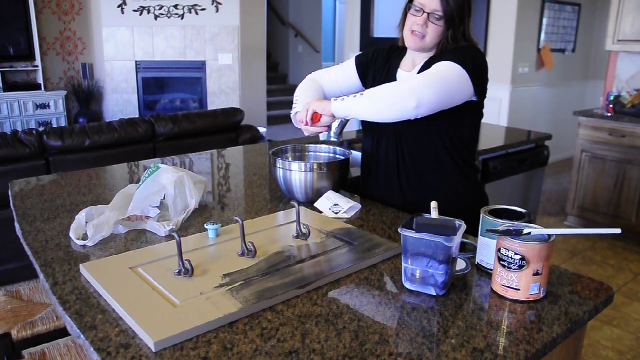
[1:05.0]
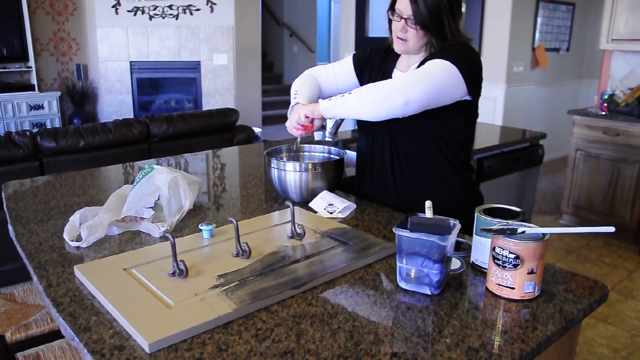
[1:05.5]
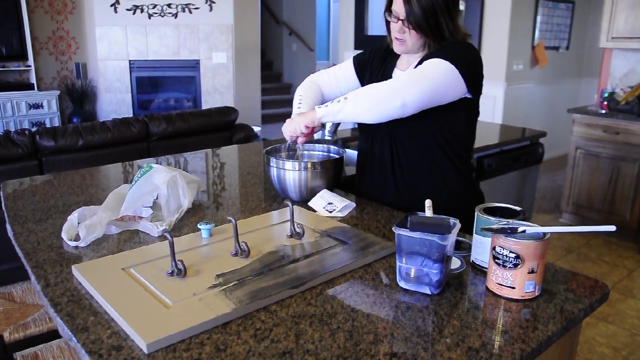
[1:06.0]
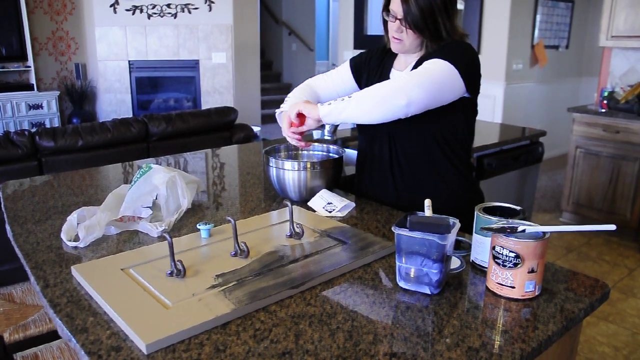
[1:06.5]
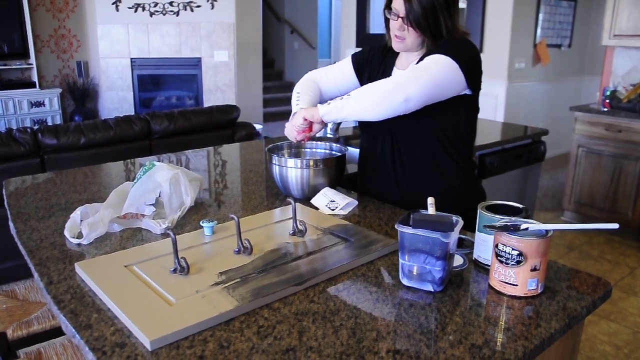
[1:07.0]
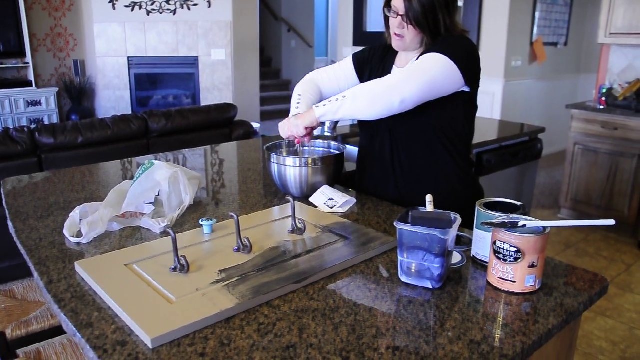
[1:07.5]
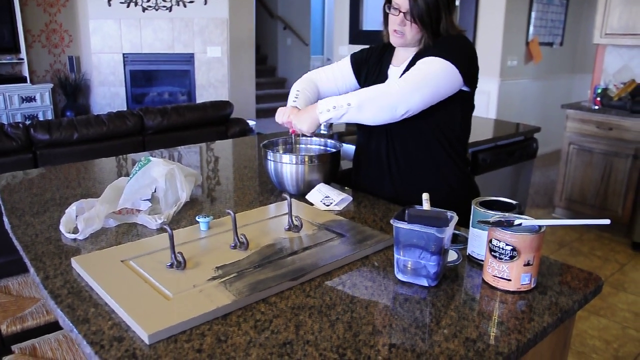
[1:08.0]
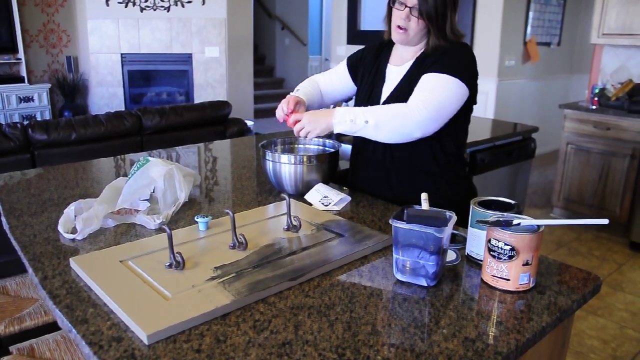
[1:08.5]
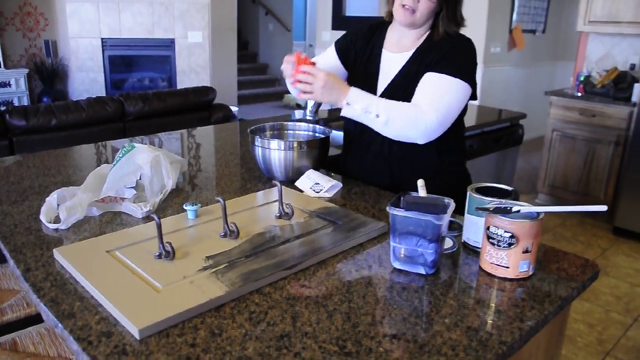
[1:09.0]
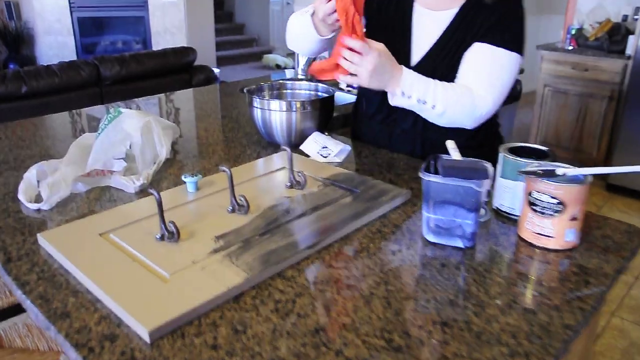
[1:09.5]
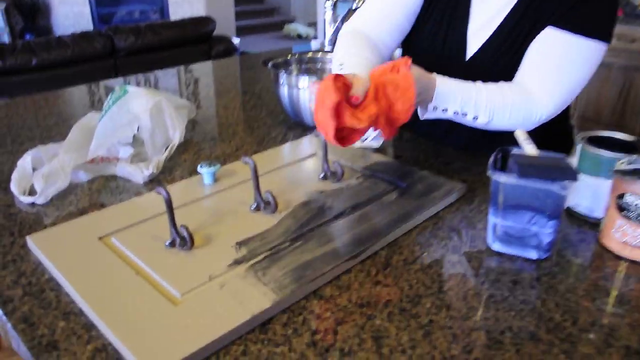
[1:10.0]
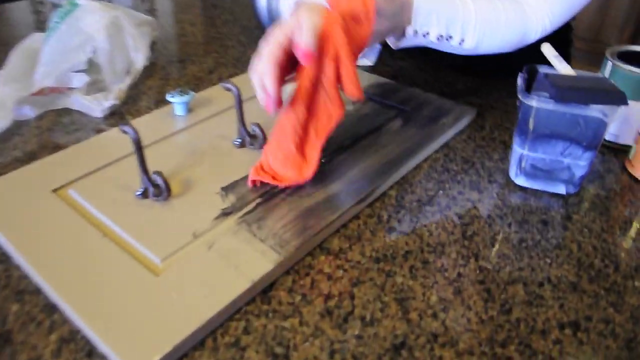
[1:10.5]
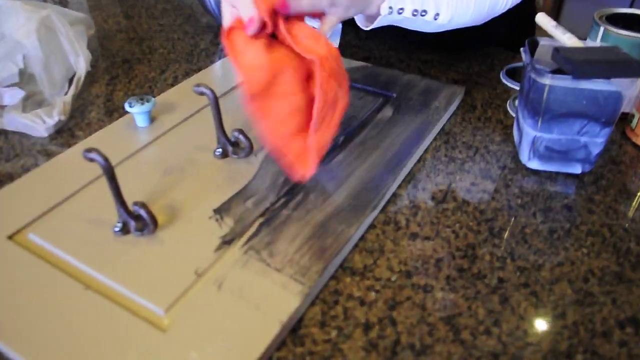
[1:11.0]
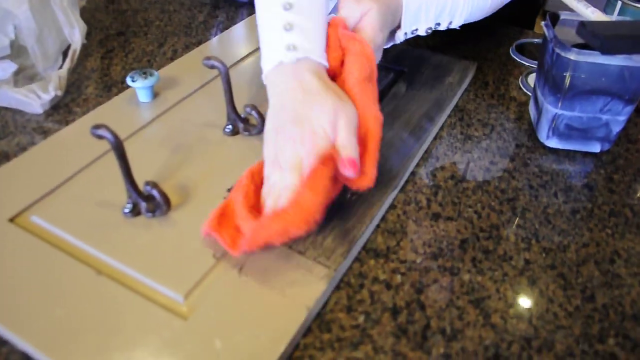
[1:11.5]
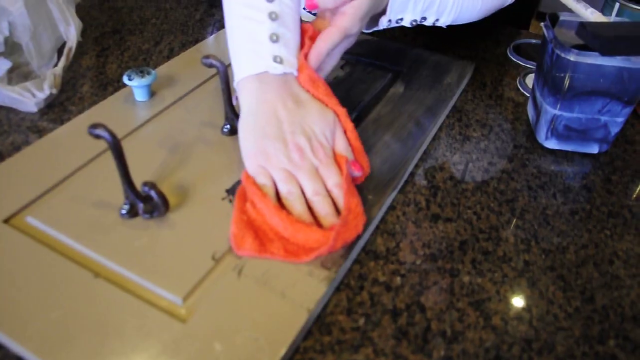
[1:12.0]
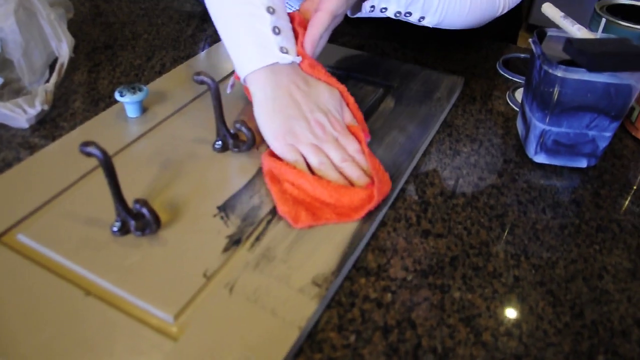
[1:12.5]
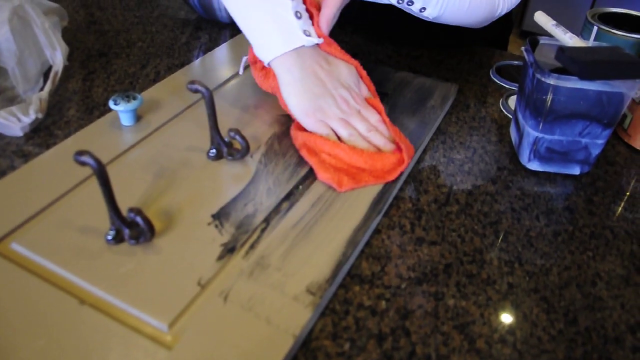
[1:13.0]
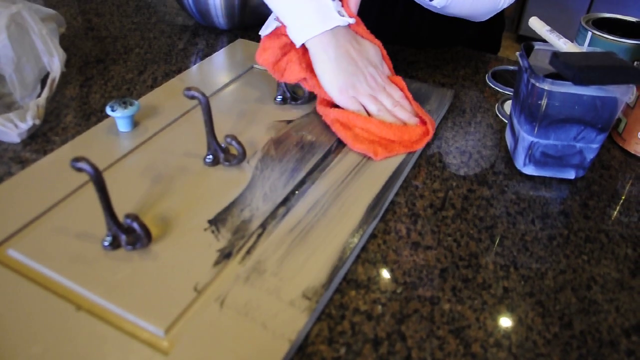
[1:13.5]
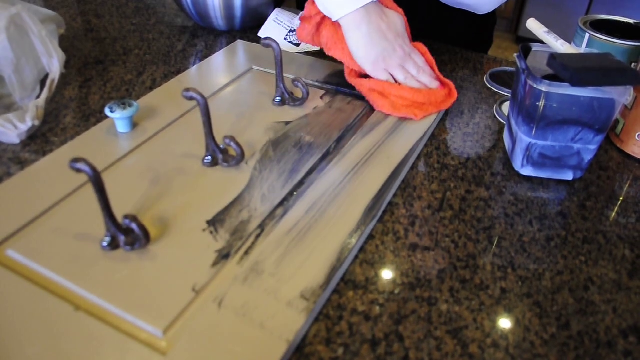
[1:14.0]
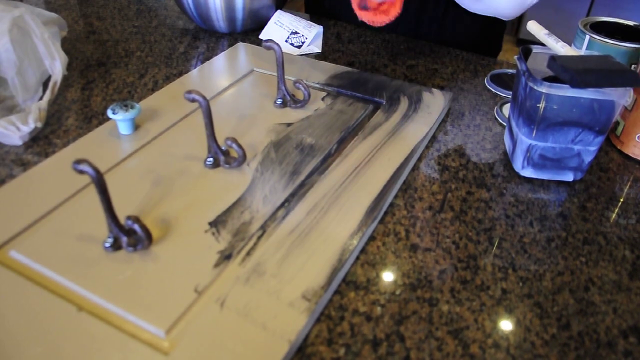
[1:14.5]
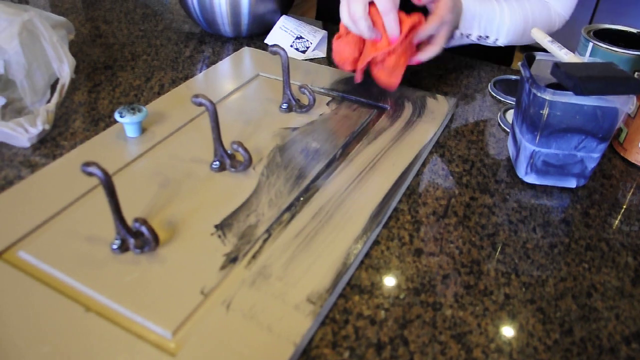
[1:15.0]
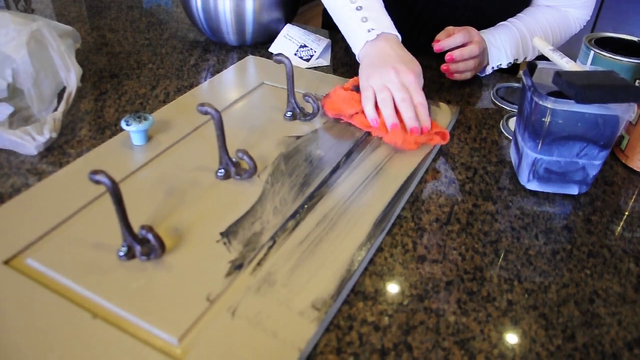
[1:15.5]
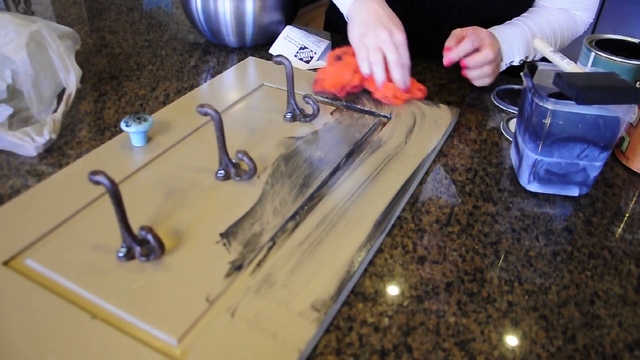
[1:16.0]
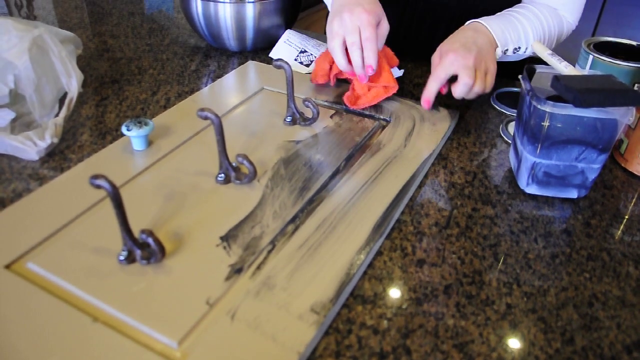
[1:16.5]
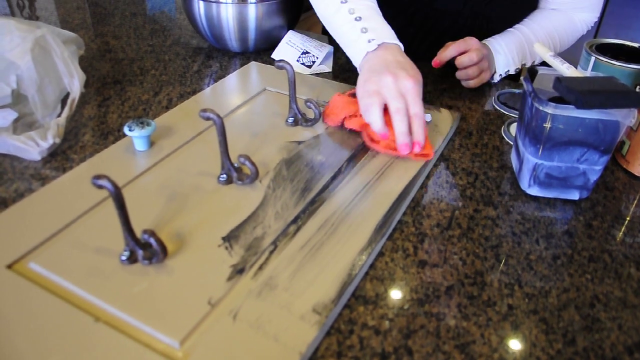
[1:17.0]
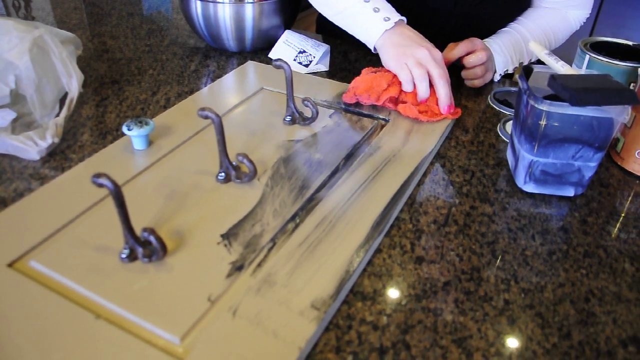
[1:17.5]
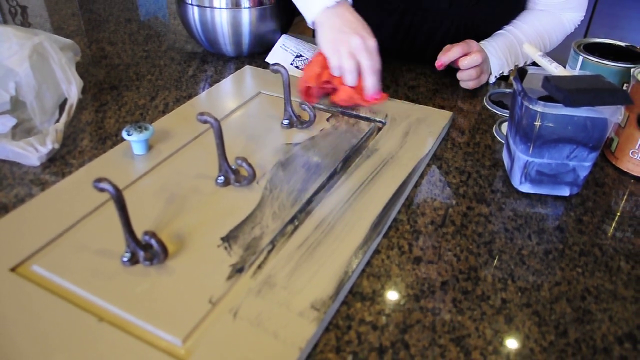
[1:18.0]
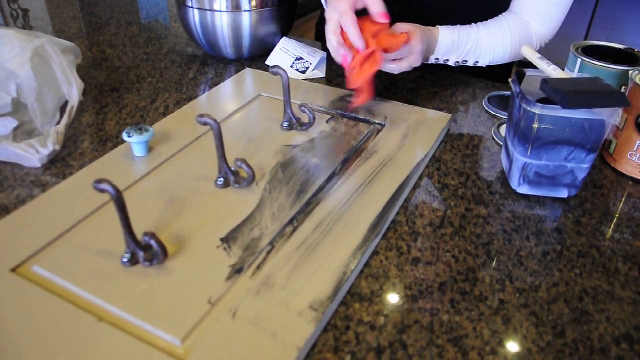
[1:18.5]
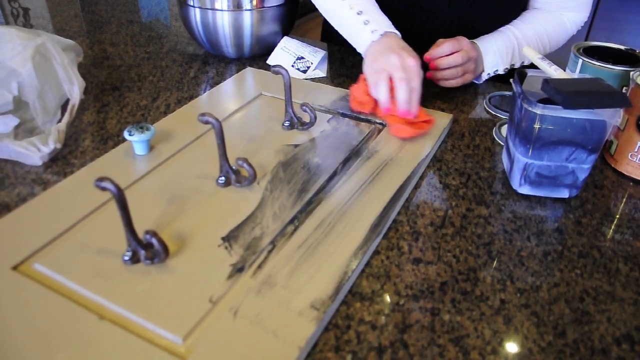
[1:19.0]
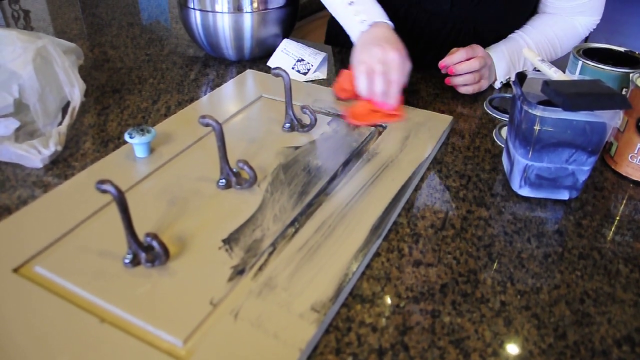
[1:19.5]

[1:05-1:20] In the YouTube video called How to Glaze Furniture, the woman wrings out a red cloth into a silver bowl after dipping it in liquid, then uses it to wipe off what she painted on the piece of wood. The rectangular wood is kind of a beige color, with three metal hooks in its center and a ceramic knob at what appears to be the top from this perspective. On the kitchen counter are two cans of paint, primer, oil or something similar, along with a plastic container with a paintbrush lying on top of it. She wipes the product completely off, leaving an open streak where it comes up on the cloth, so this might be some type of treatment. She is still wiping as the shot ends.